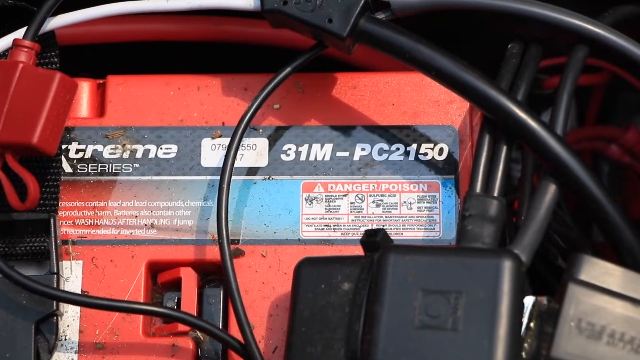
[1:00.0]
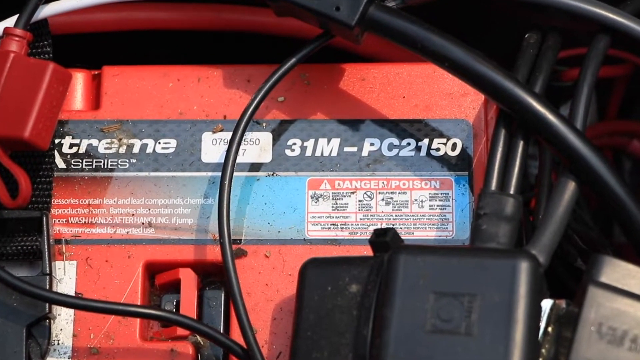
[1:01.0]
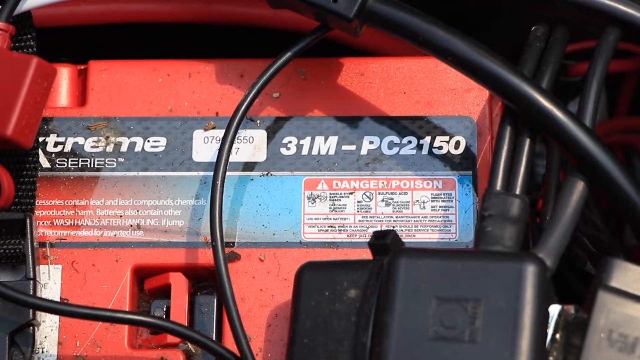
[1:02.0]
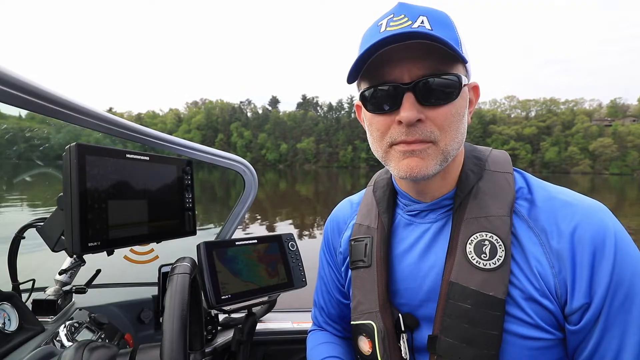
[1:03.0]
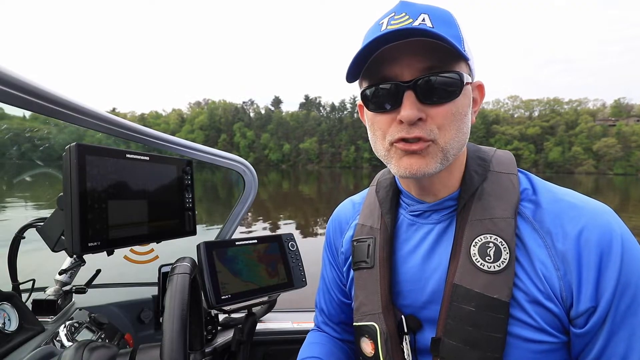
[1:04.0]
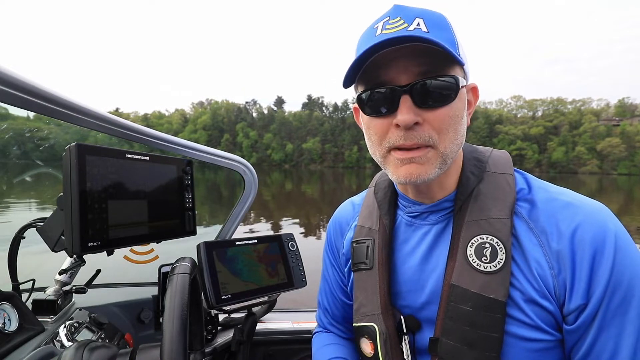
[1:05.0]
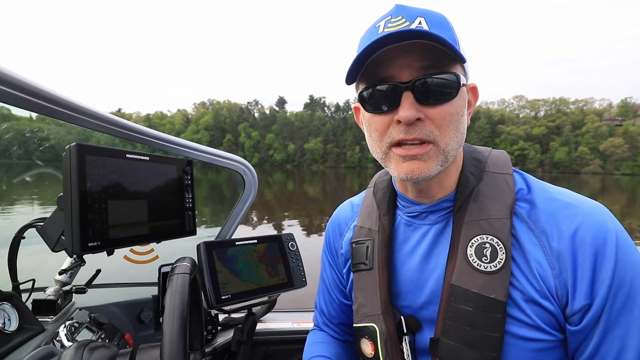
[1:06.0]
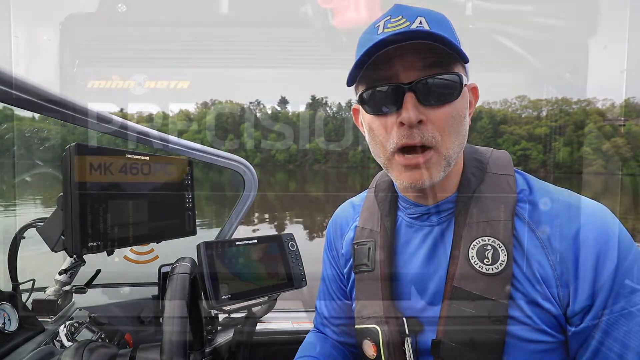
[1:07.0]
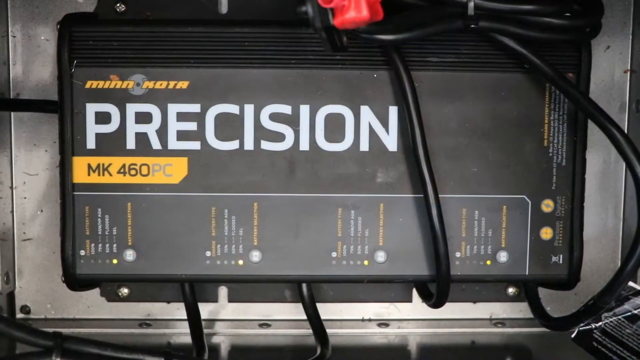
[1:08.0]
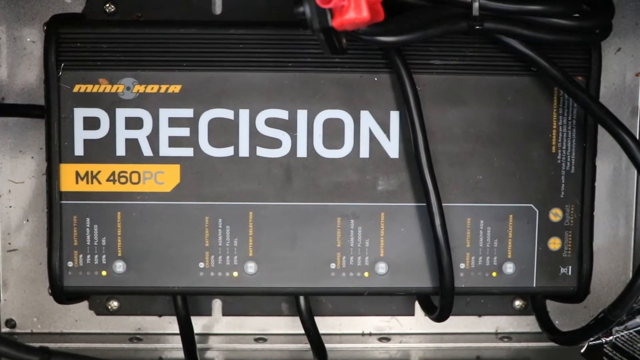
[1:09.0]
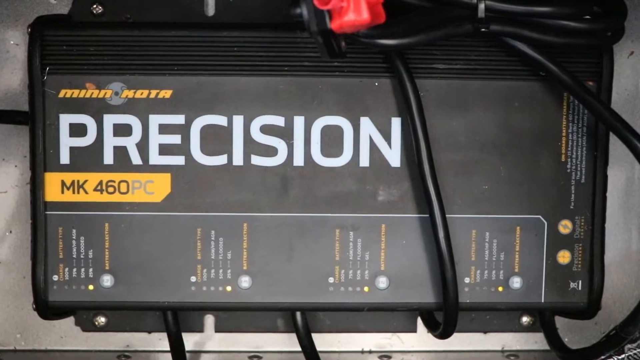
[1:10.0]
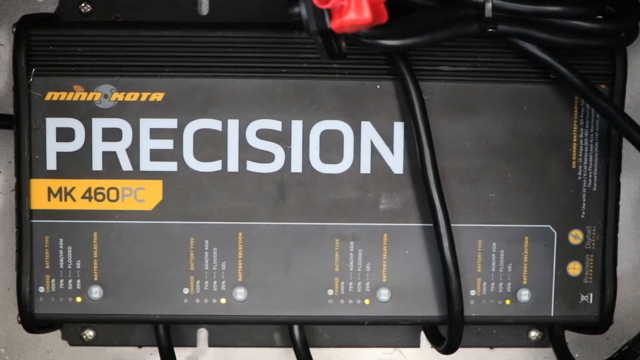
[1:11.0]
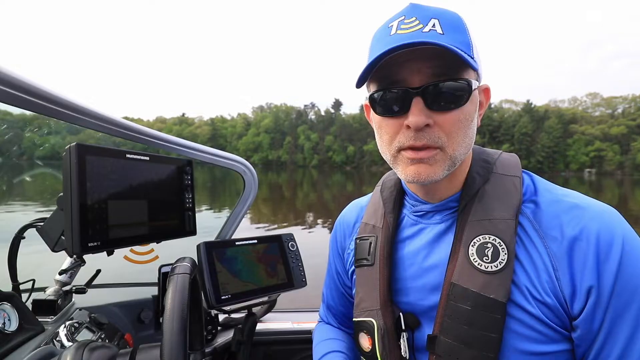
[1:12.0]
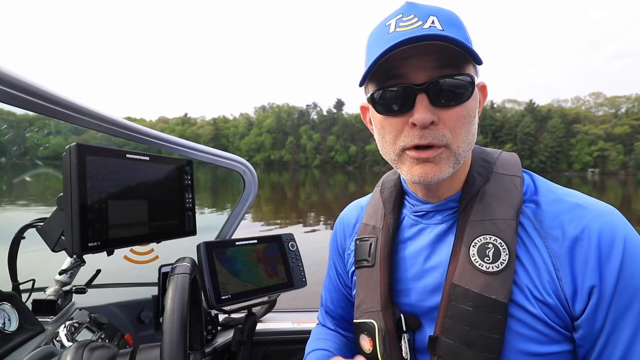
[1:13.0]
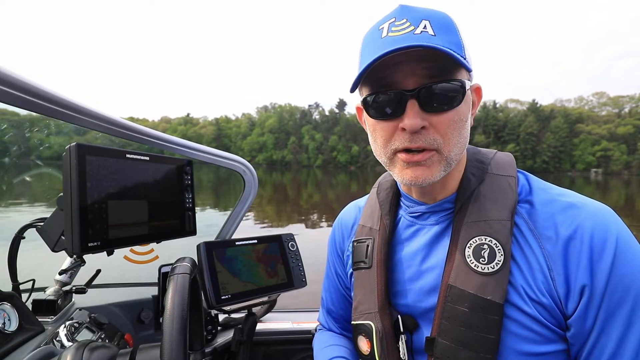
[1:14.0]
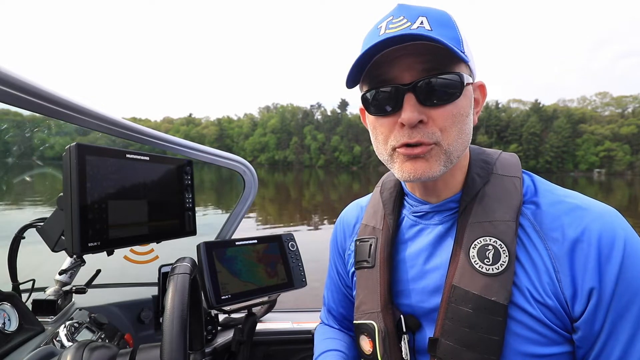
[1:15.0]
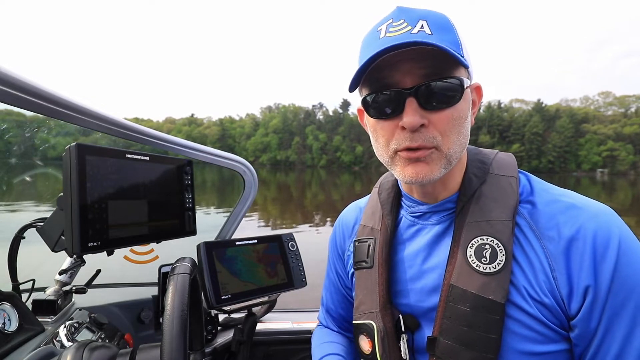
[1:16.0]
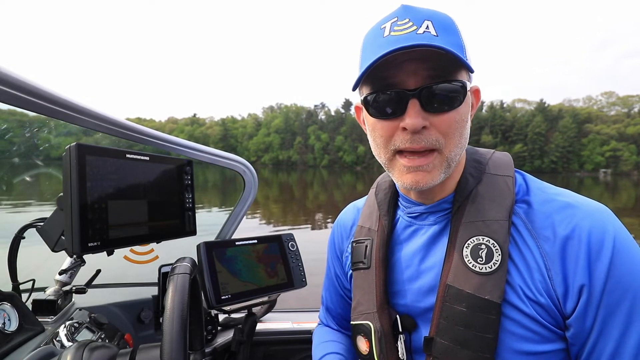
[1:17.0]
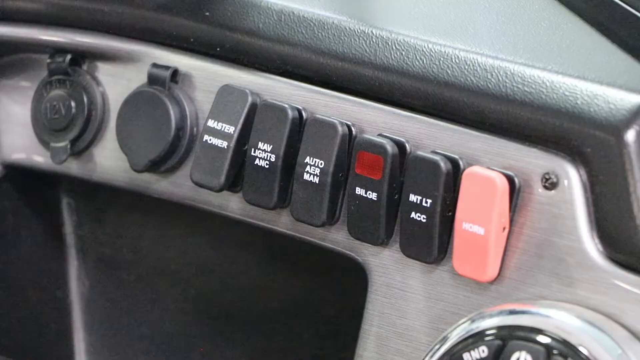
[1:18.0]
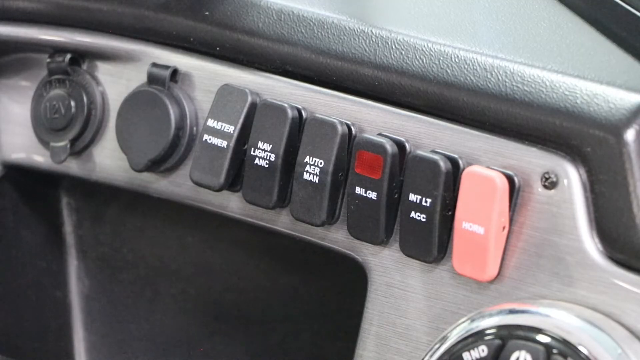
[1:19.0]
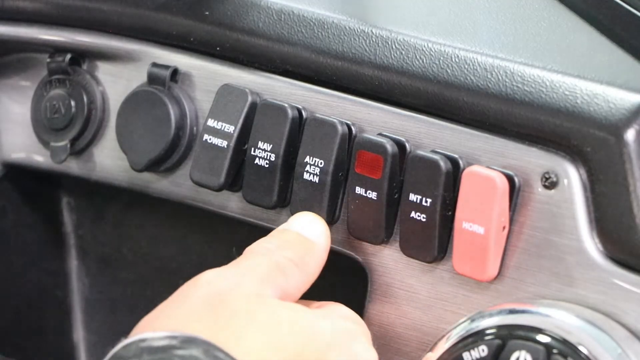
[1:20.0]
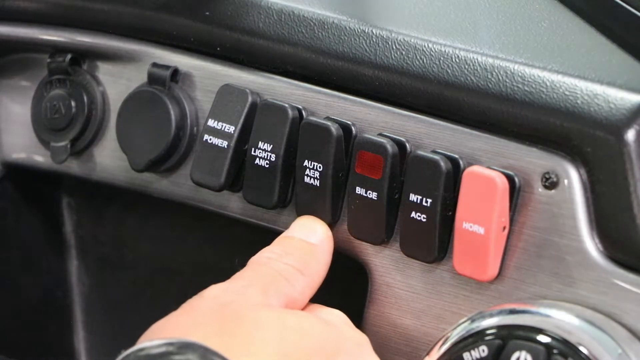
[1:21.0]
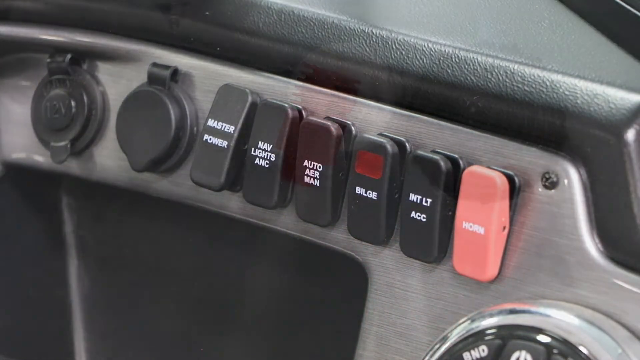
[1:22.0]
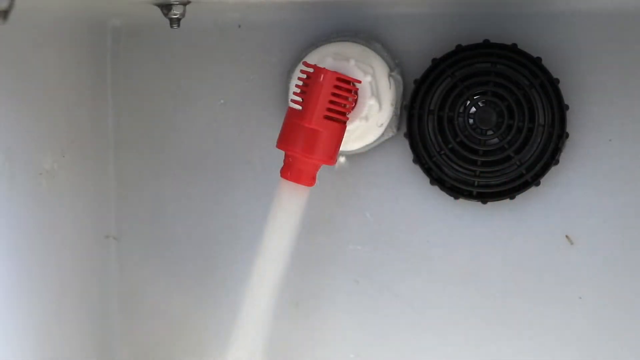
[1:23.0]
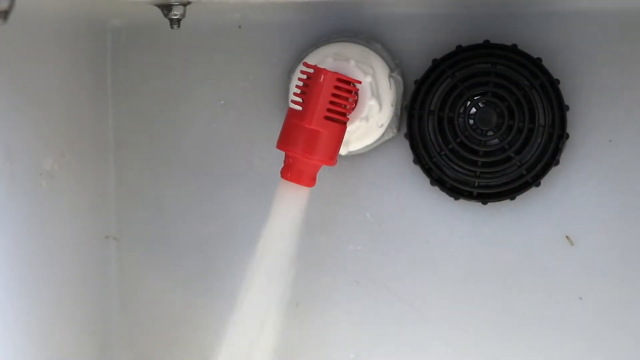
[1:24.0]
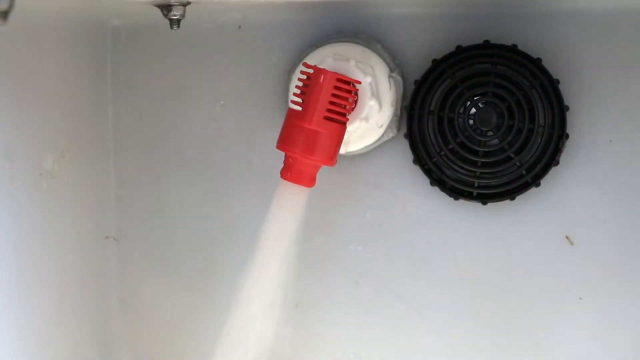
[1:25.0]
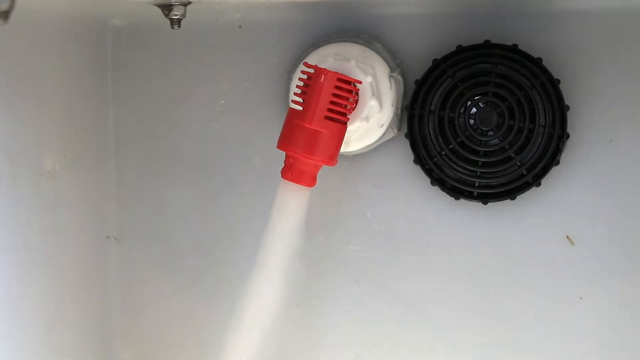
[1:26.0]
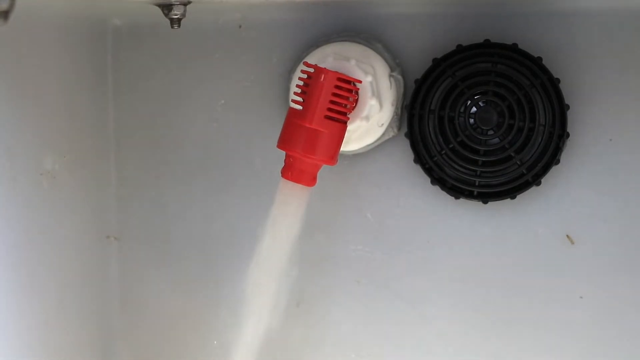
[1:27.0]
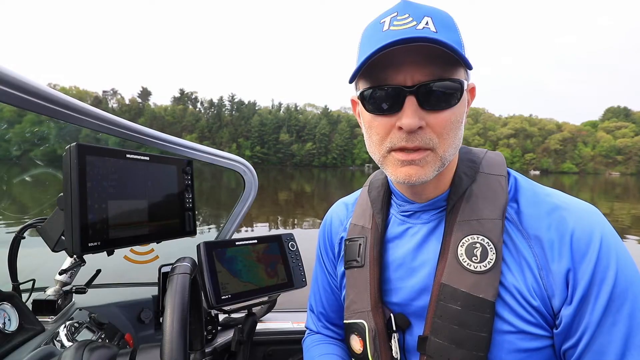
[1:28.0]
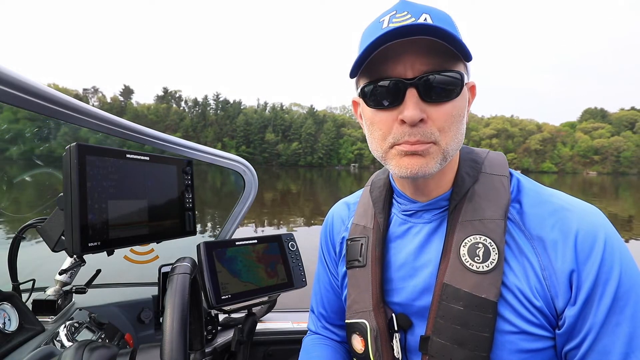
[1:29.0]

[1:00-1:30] A close-up shows the battery, which is red and black, with some dangerous and poison labels and a bit of dirt on it. The scene quickly transitions to a close-up of the man in the boat in the solid blue shirt, speaking and looking from center to the right, his right hand gesturing up and down throughout. Next, a close-up shows a black box-shaped piece of equipment with "precision" written on the center of the device; the camera zooms in very closely and focuses on the text in the center. The video transitions back to the man in the boat, who continues to speak and look directly toward the camera, his right hand gesturing and his thumb coming in and out of view. The scene then cuts to a right hand and thumb pressing a flip switch on the instrument panel of the boat; the switch is labeled with text beginning "auto".